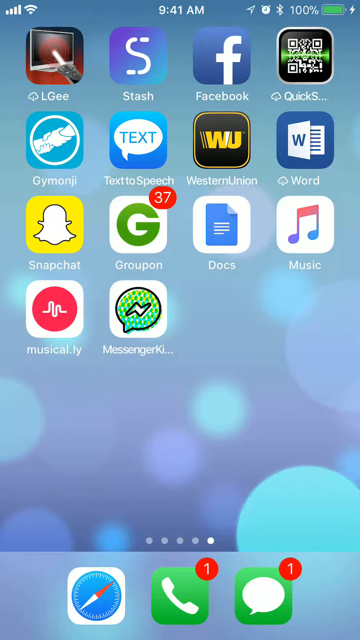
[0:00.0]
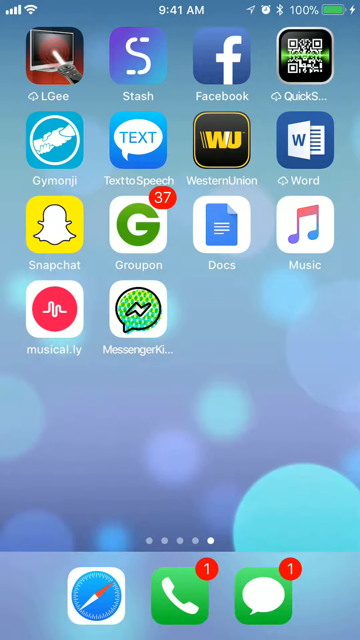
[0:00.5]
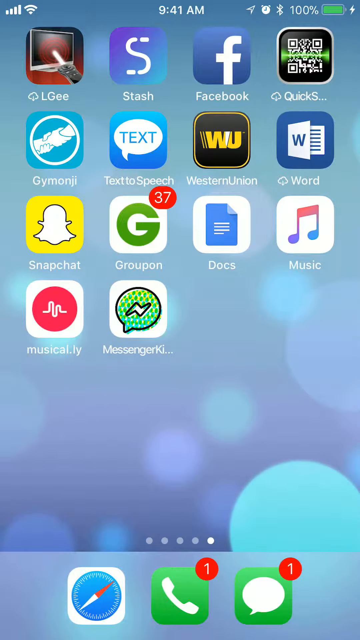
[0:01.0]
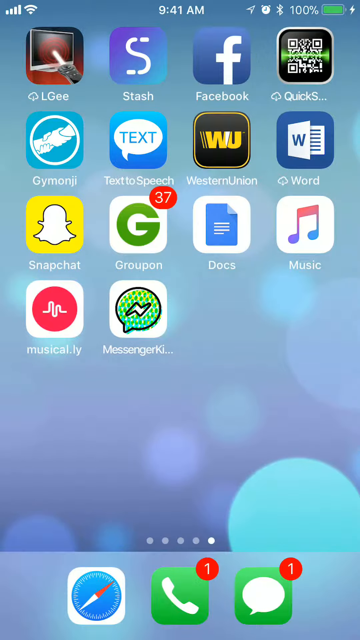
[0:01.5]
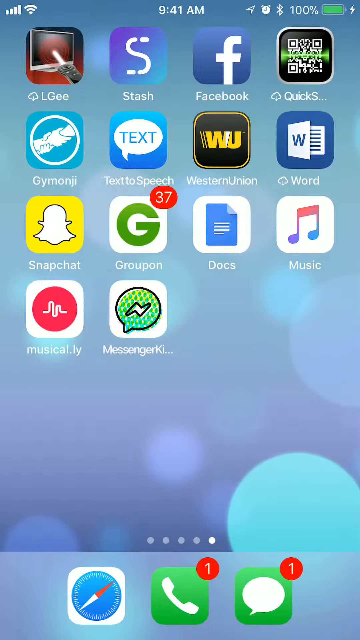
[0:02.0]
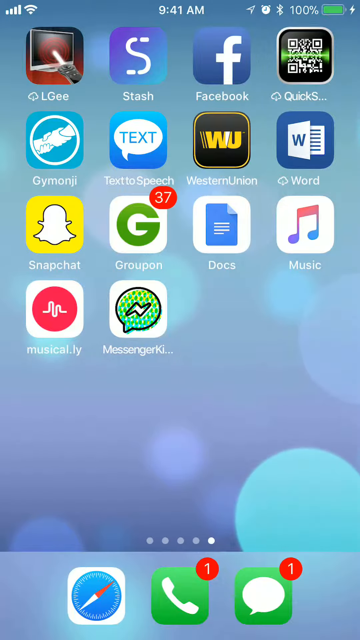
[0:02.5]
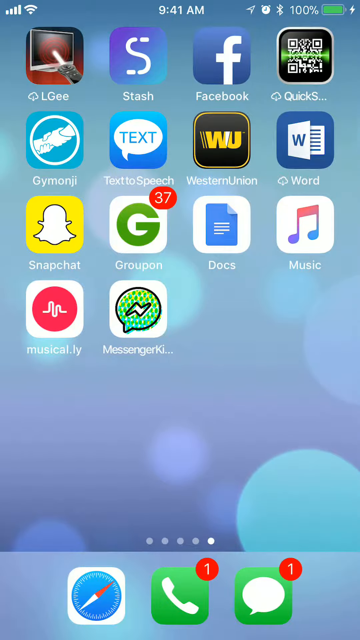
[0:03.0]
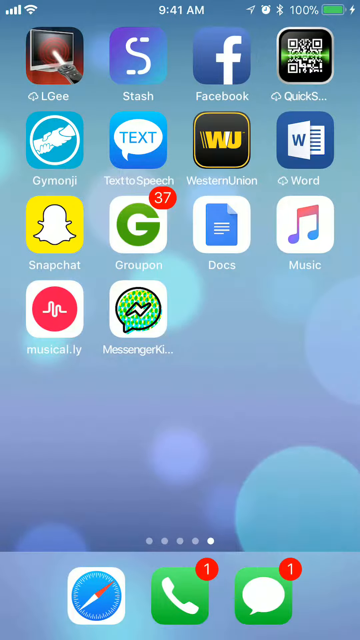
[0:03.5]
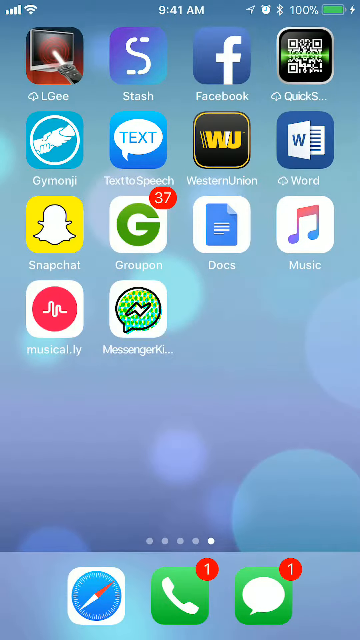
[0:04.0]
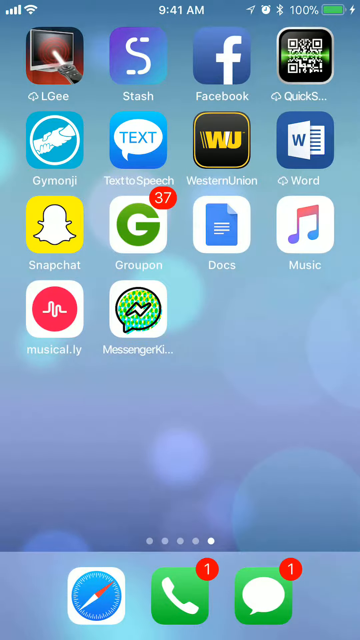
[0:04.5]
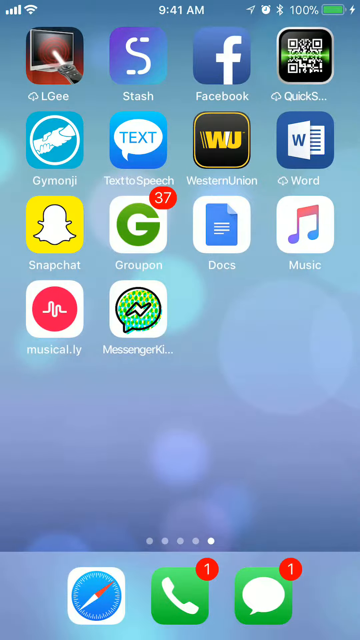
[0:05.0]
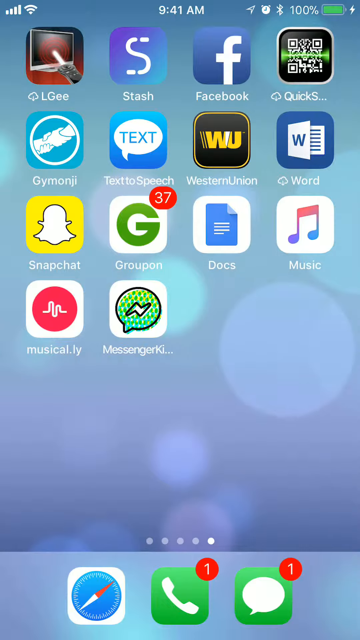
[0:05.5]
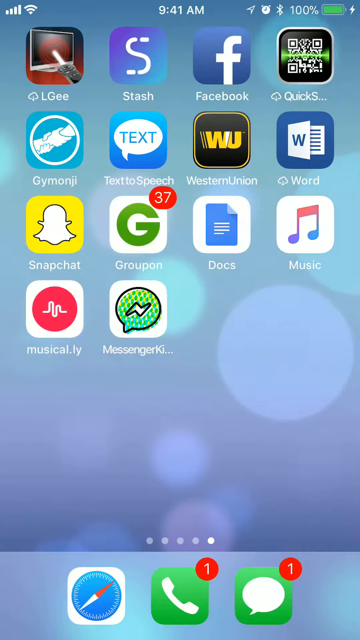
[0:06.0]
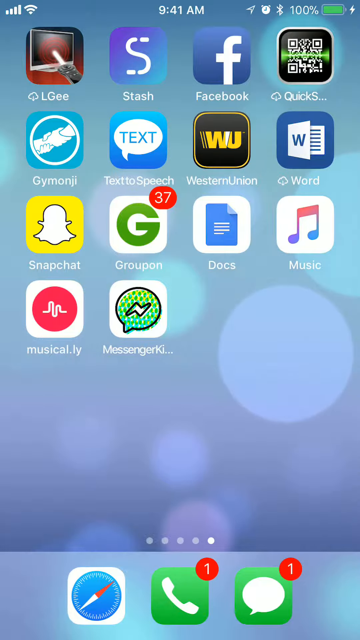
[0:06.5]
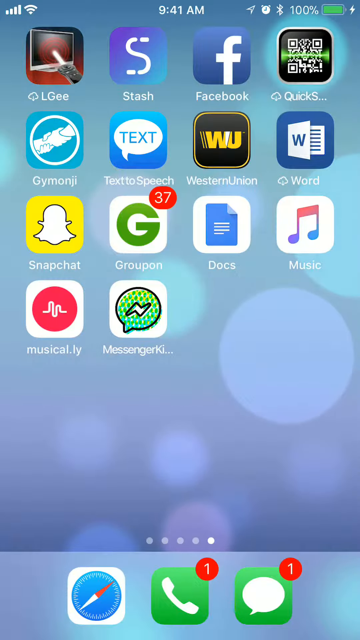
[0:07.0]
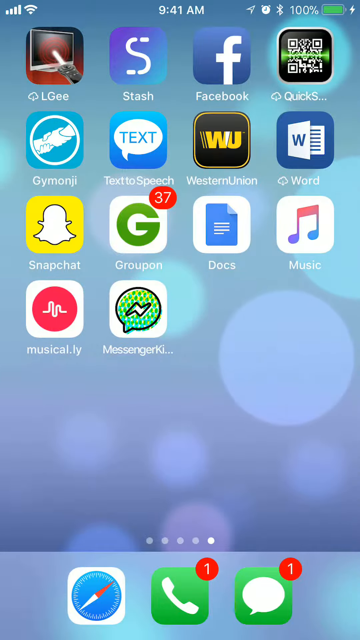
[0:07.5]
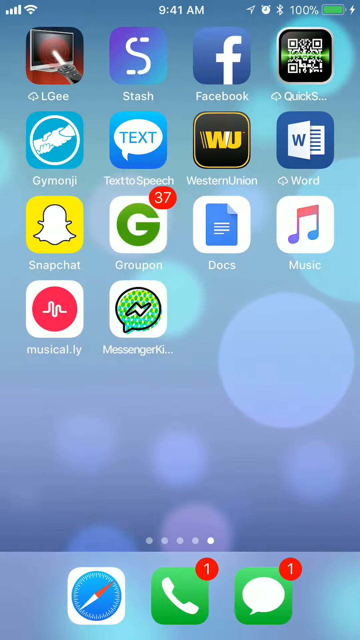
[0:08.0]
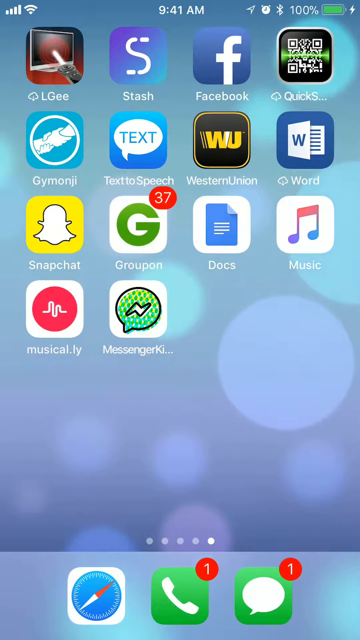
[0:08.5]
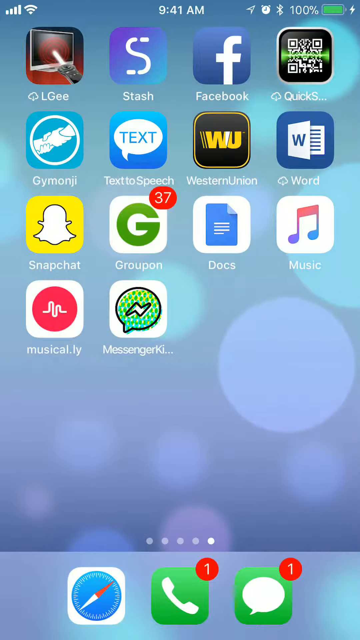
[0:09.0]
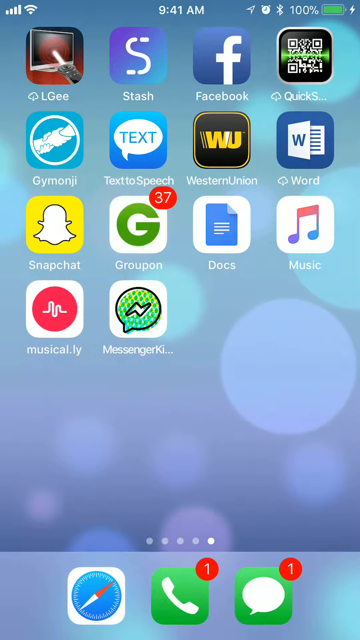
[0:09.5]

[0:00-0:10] An iPhone home screen displays multiple apps, including Facebook, Stash, Word, Music, Docs, Messenger, Musical.ly, Snapchat, Groupon, Text-to-Speech, Gym and LG. At the top right, the battery is at 100% and currently charging. The background is light blue. At the top left, the Wi-Fi is on and there is signal, and the time in the middle reads 9:41.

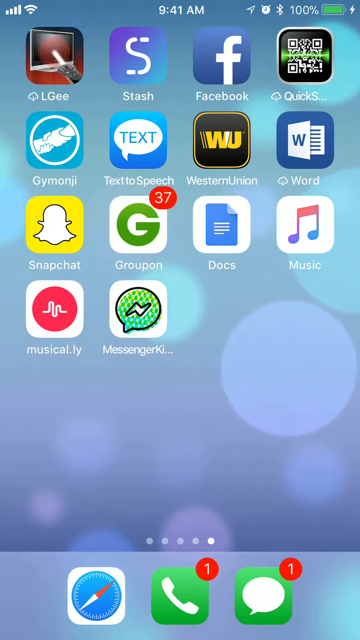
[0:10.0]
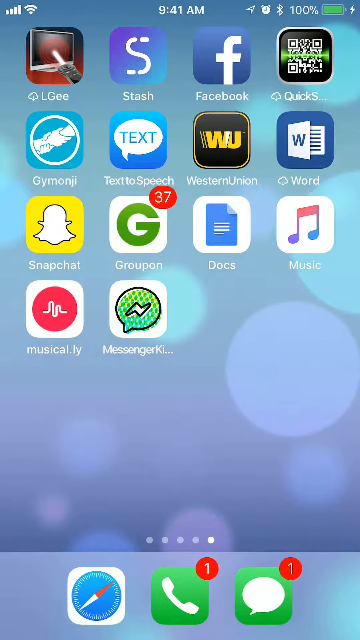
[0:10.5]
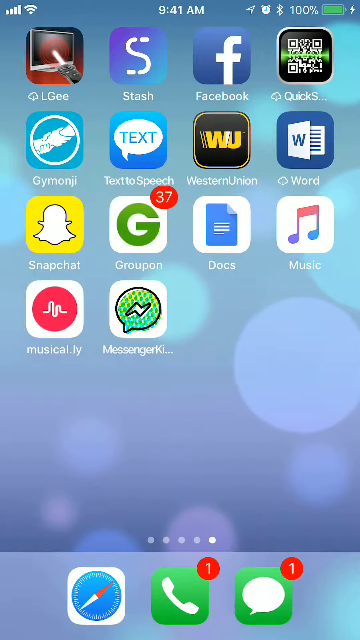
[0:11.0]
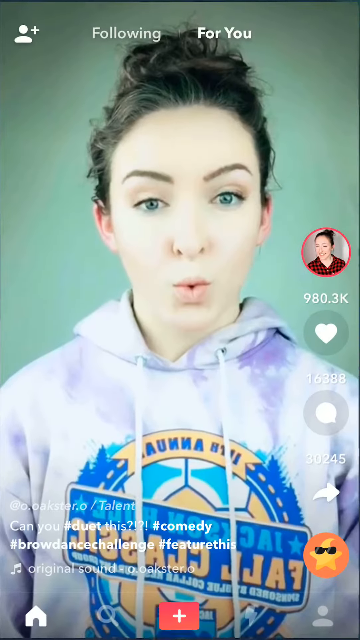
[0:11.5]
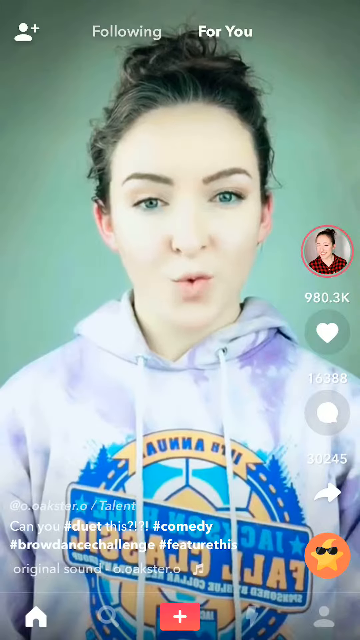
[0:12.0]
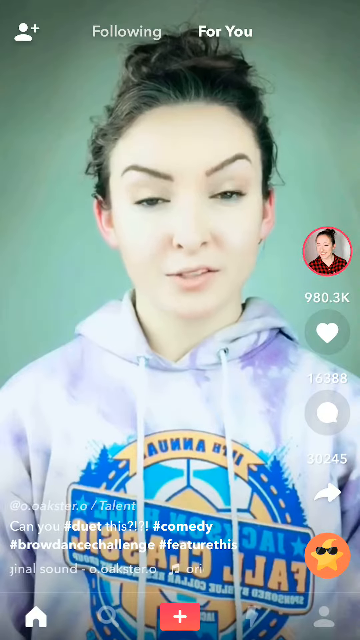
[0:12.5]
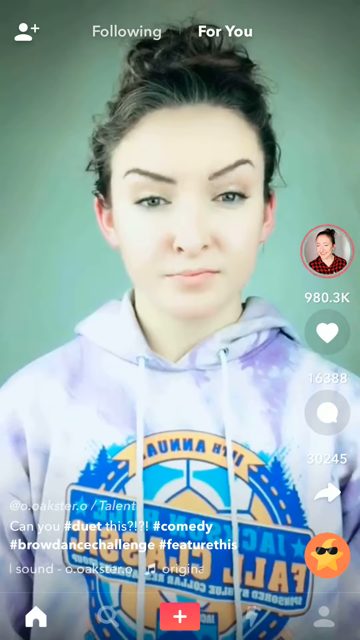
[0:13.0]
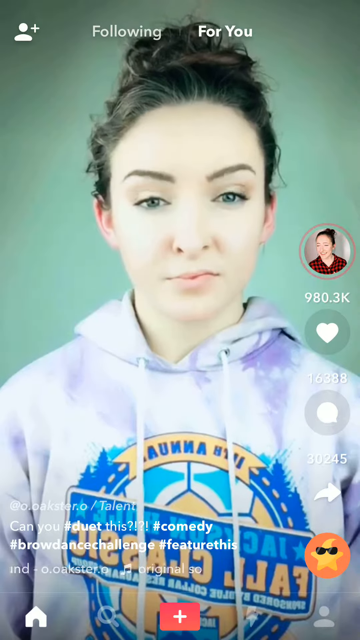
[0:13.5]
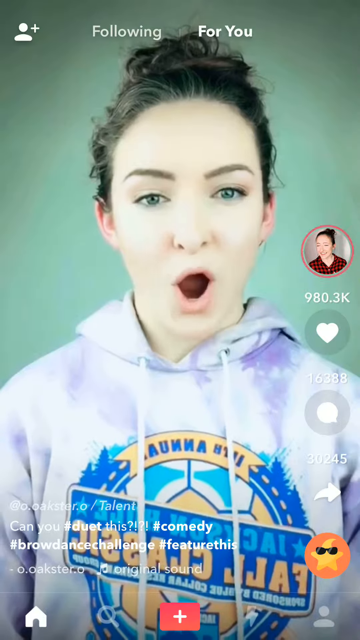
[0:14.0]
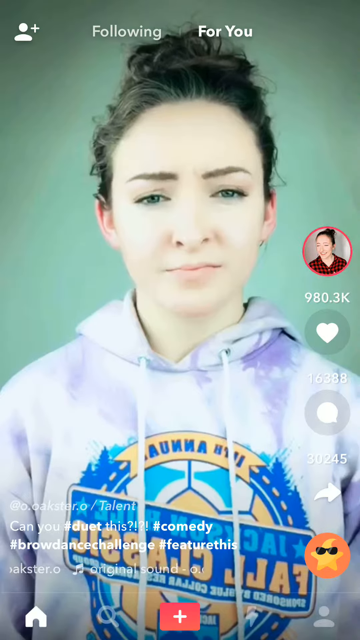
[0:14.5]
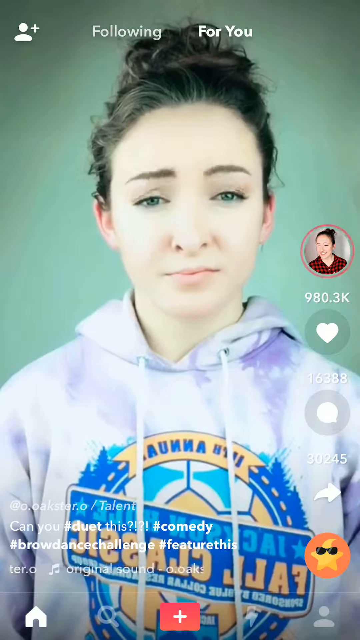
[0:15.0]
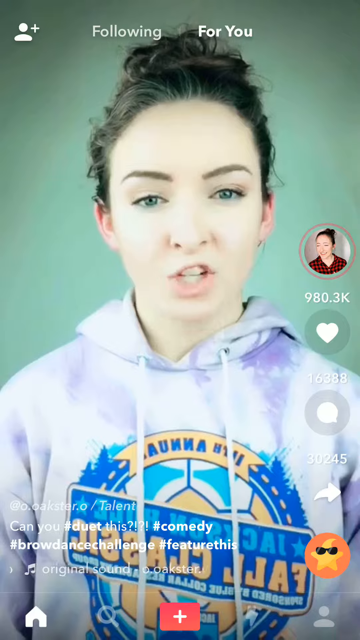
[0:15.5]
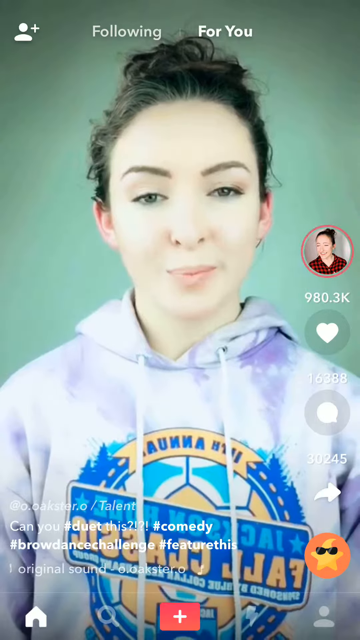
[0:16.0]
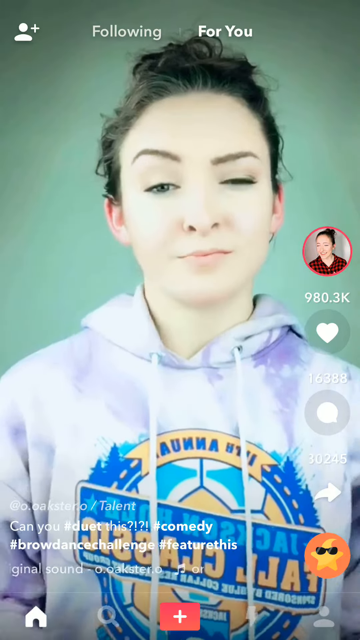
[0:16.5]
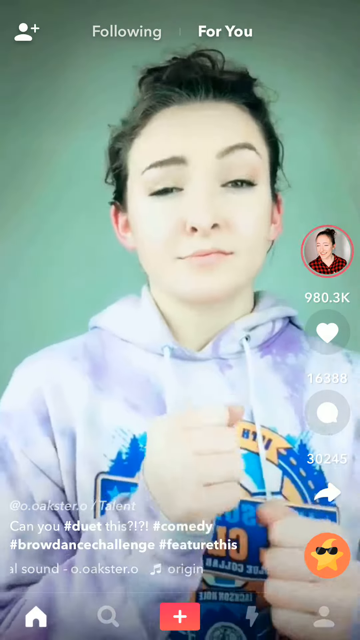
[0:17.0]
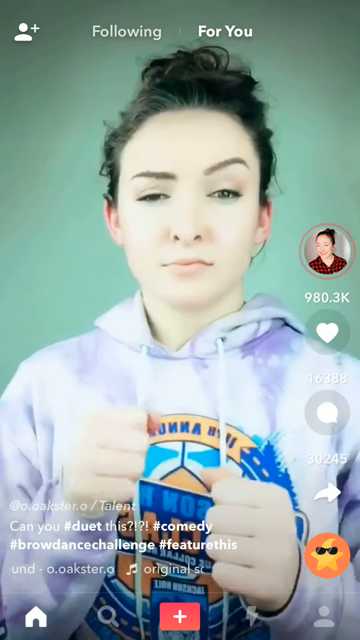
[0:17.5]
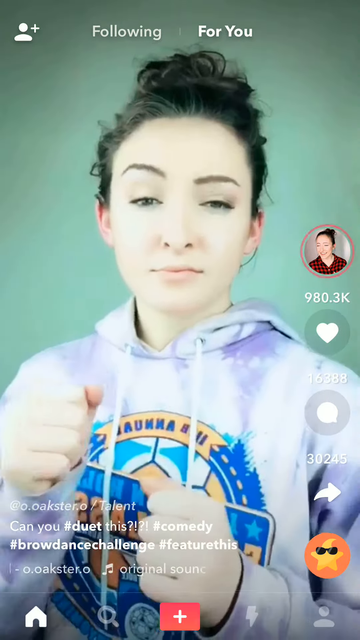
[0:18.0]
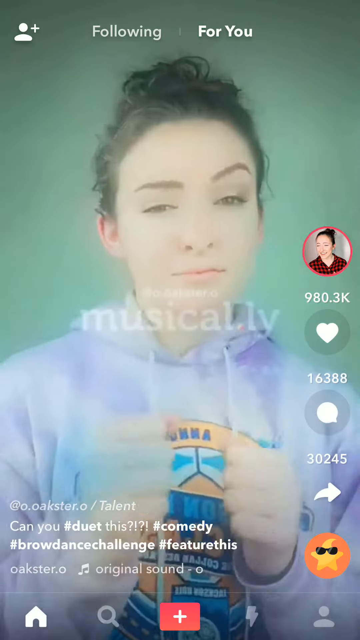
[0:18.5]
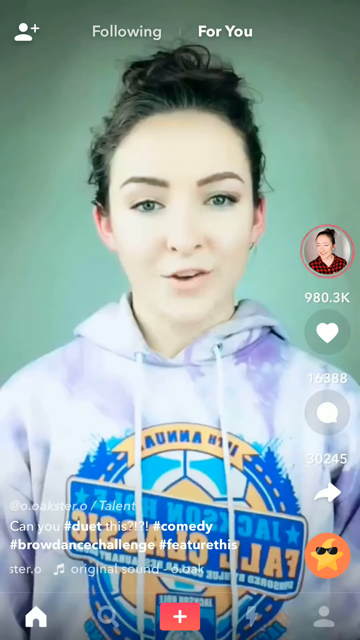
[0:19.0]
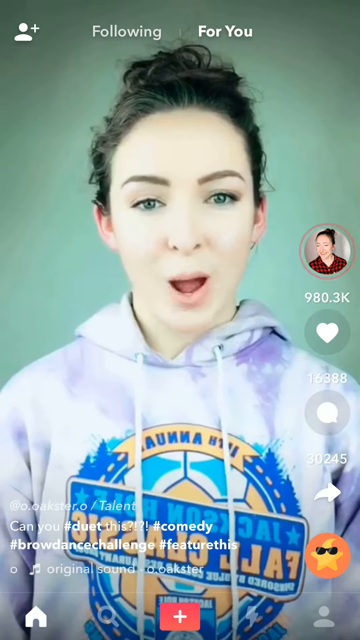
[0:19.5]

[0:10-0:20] The phone remains on the home screen. Along the bottom are the three main apps: Safari at the bottom left, the phone button and the messaging app. Above them is the blue background with circles on it. Among the many apps on the home screen, the user taps one called Musically. The app opens and looks like a video sharing app, showing many people making videos, and then a woman appears on the screen.